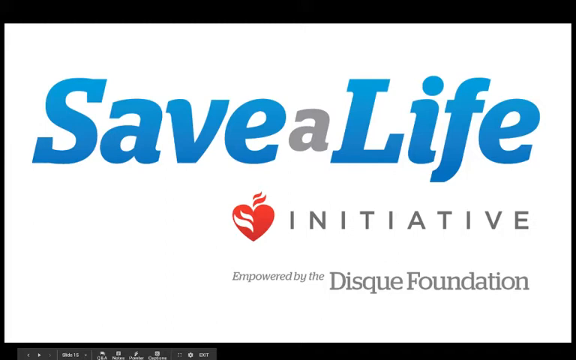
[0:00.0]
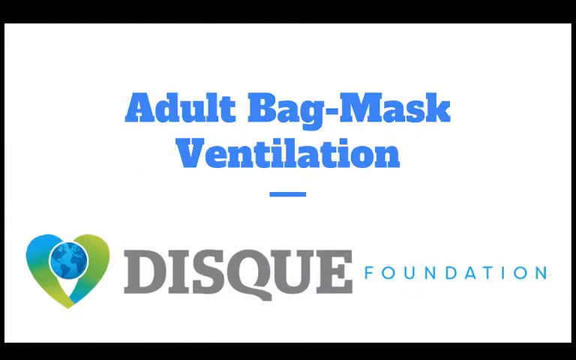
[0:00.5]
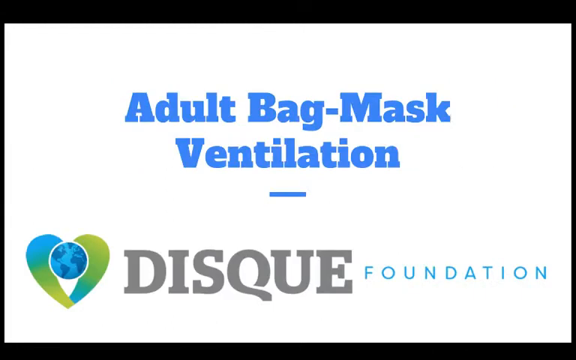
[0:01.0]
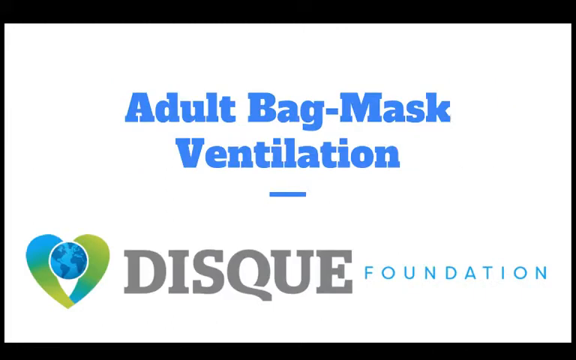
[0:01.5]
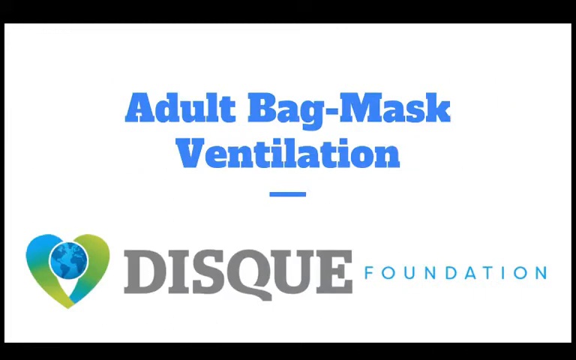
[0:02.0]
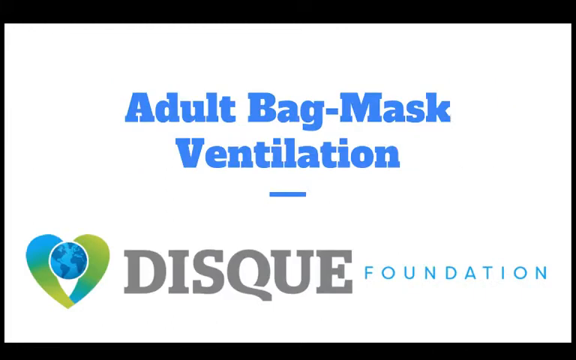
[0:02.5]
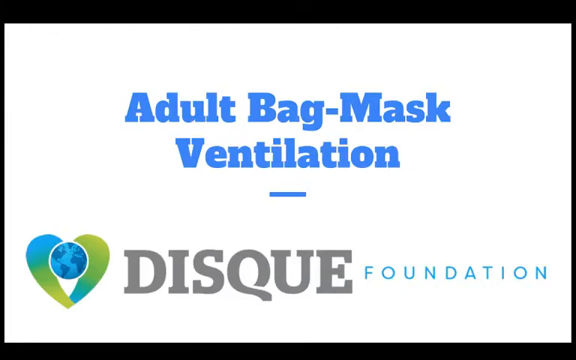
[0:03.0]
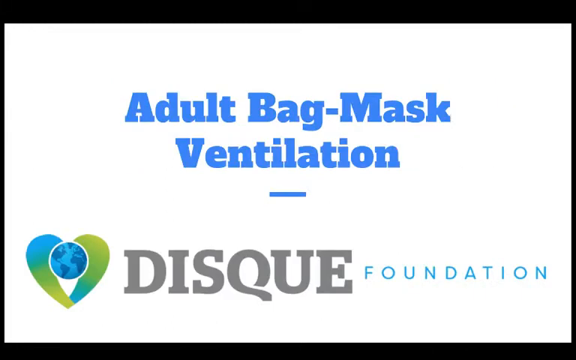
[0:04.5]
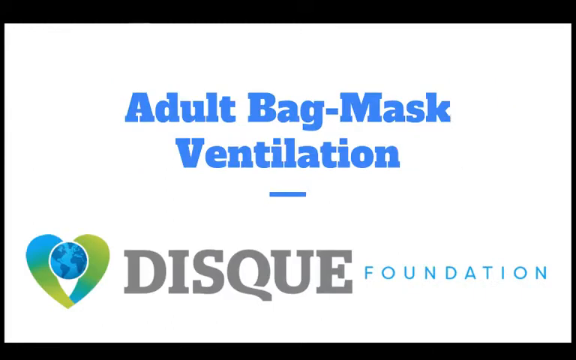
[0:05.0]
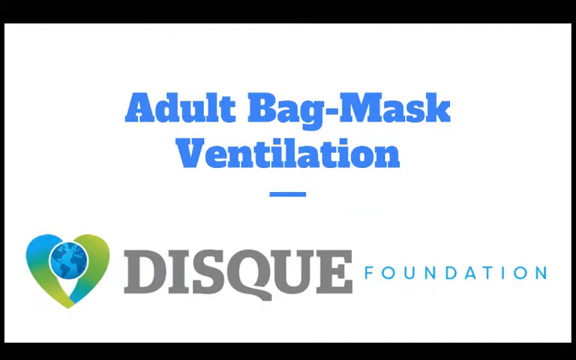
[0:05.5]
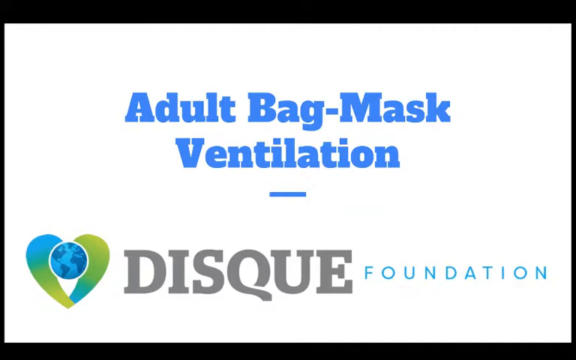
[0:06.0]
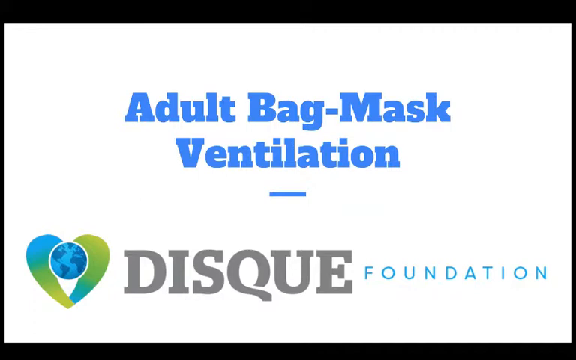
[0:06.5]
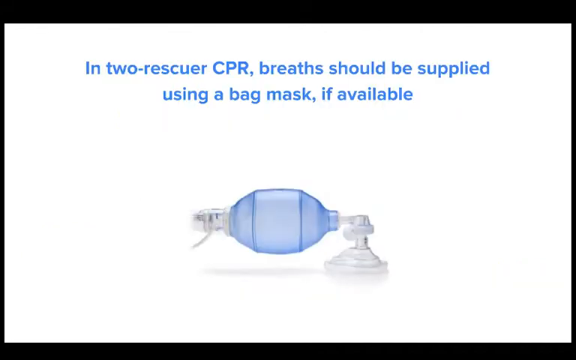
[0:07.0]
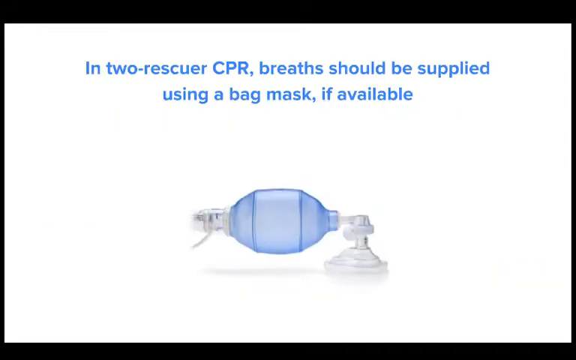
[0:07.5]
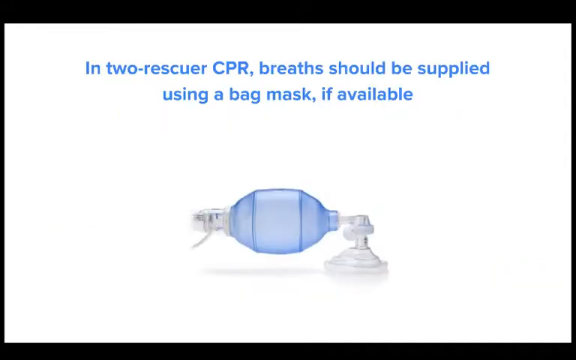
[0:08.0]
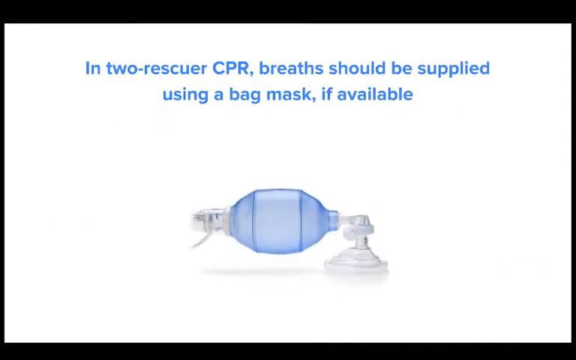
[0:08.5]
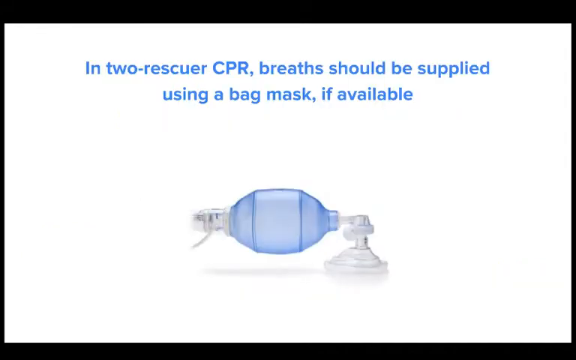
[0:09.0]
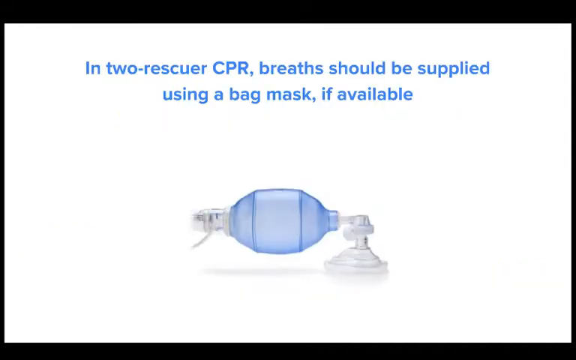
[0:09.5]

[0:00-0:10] The opening screen has a white background with the words "Adult bag-mask ventilation" across two lines at the top in a sort of medium blue, with a hyphen between "bag" and "mask". In the bottom left there is a logo: a globe and a sort of heart shape, with the globe at the top of the heart and the sides of the heart a mixture of a kind of greenish yellow and a pale blue. Beneath it is "DISQUE Foundation", with DISQUE in all caps. The screen holds for a few seconds. The next screen almost looks like a PowerPoint slide: a white screen with text at the top in a kind of medium blue reading "In two-rescuer CPR, breaths should be supplied using a bag mask if available." Beneath that is an illustration of a bag mask that almost looks like a stethoscope, or perhaps is on a base on the ground. On the right it lifts up and has a horizontal pole to the left, and in the middle is the bag, a blue bag the same color as the text, which is kind of inflated.